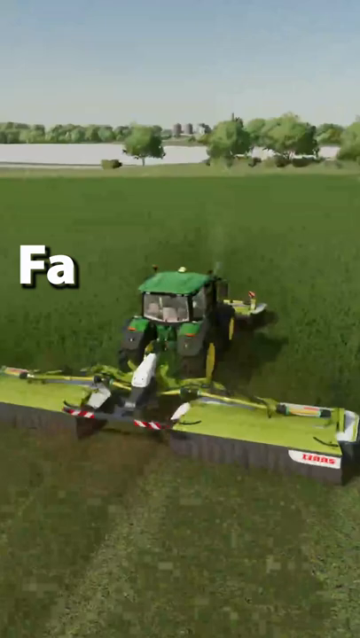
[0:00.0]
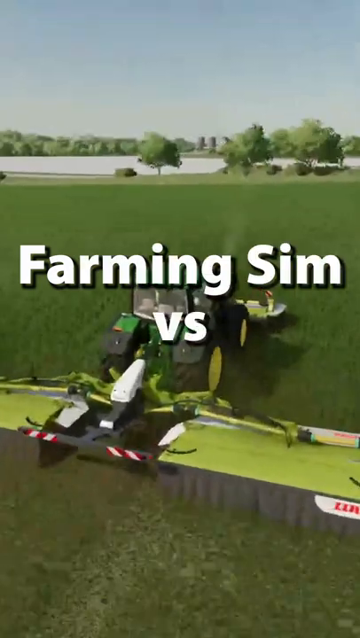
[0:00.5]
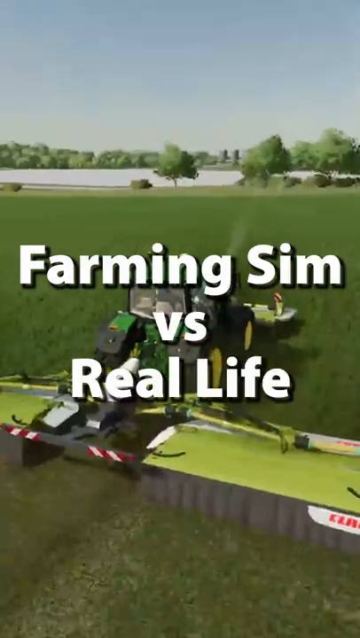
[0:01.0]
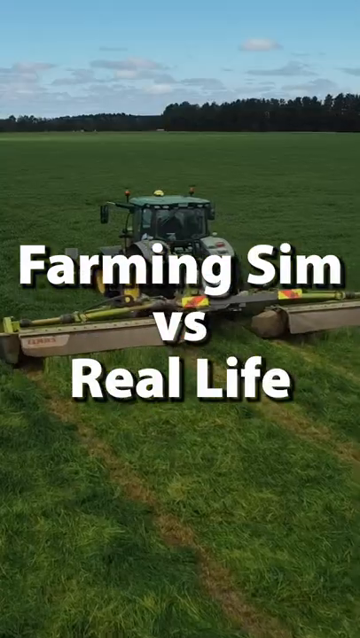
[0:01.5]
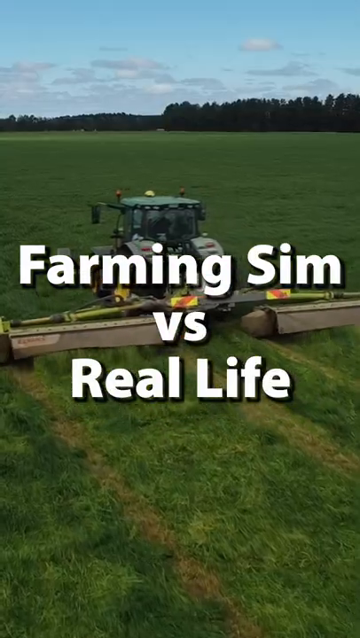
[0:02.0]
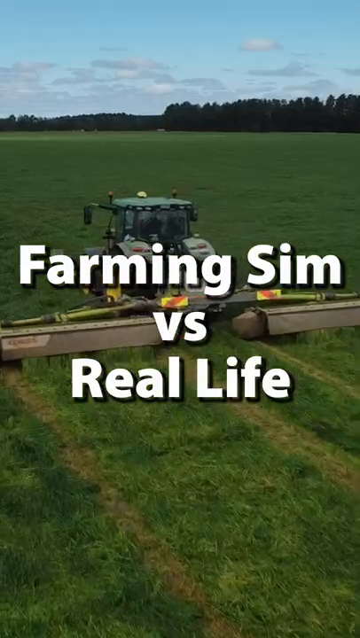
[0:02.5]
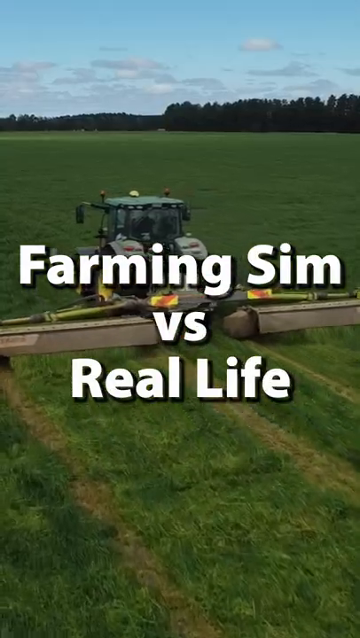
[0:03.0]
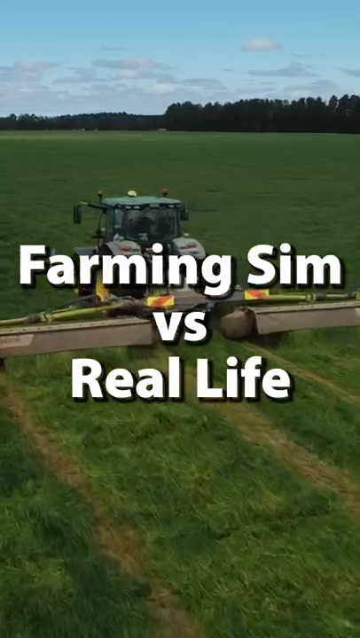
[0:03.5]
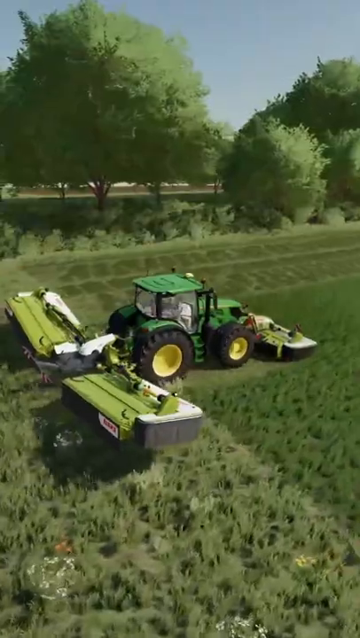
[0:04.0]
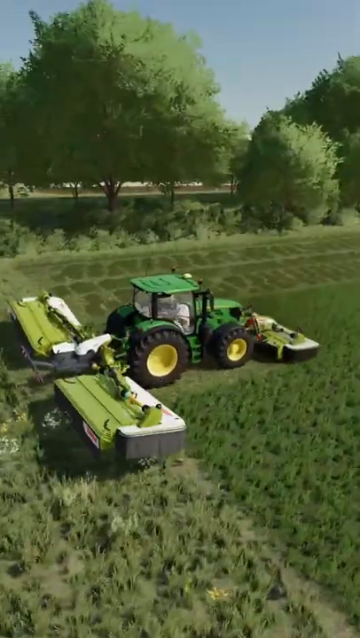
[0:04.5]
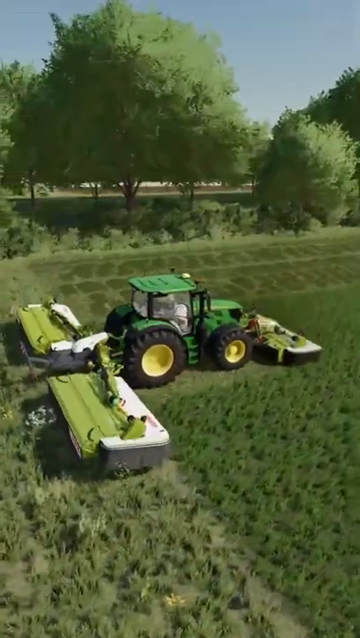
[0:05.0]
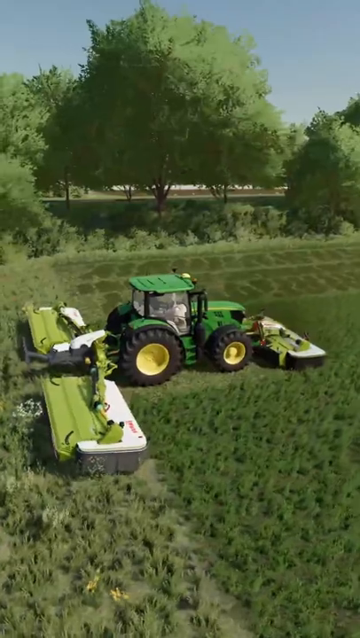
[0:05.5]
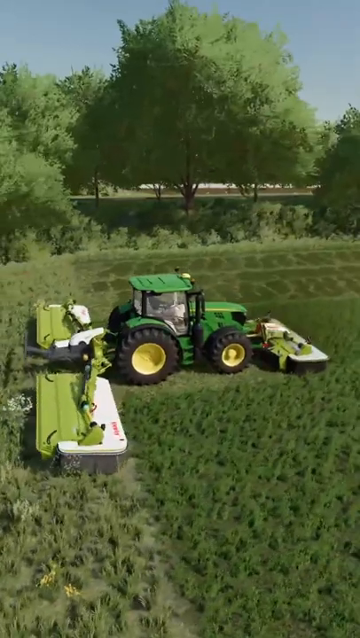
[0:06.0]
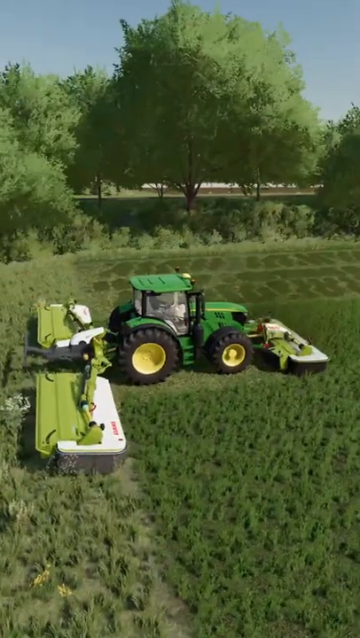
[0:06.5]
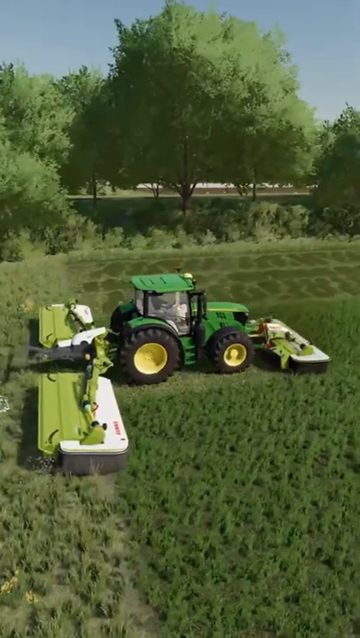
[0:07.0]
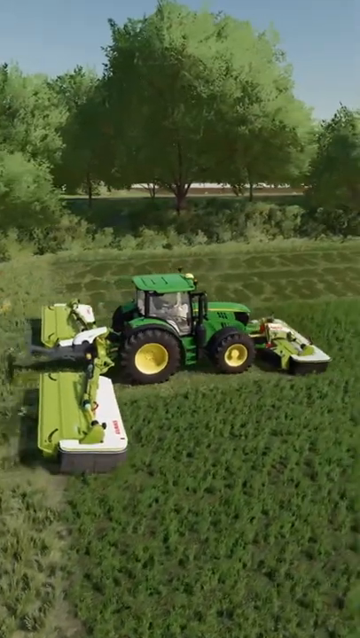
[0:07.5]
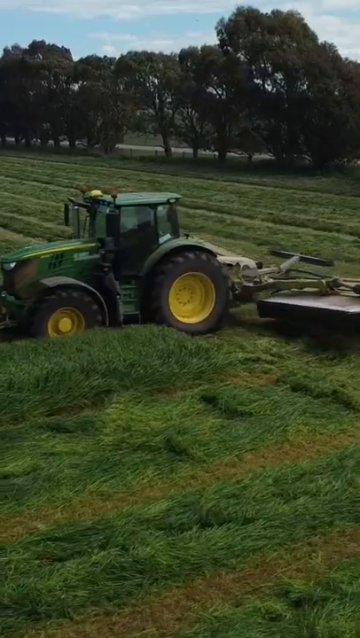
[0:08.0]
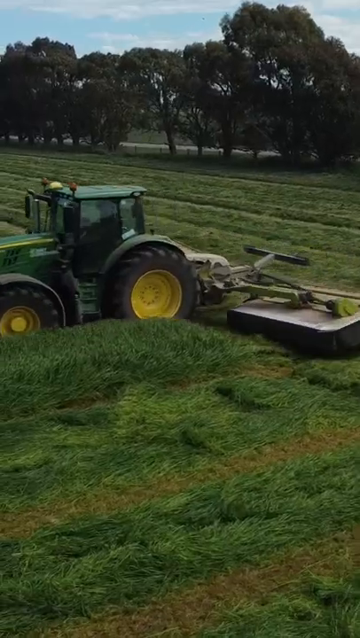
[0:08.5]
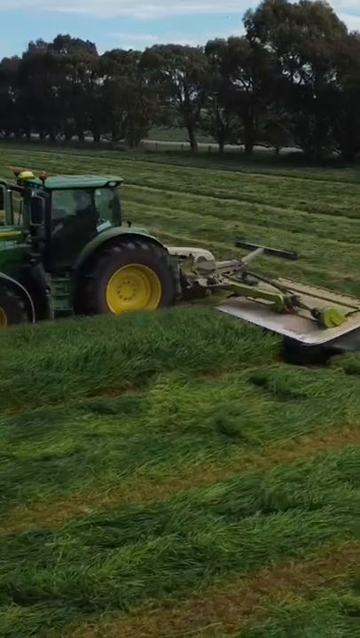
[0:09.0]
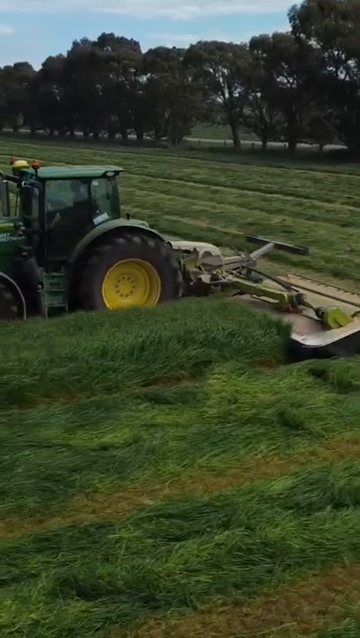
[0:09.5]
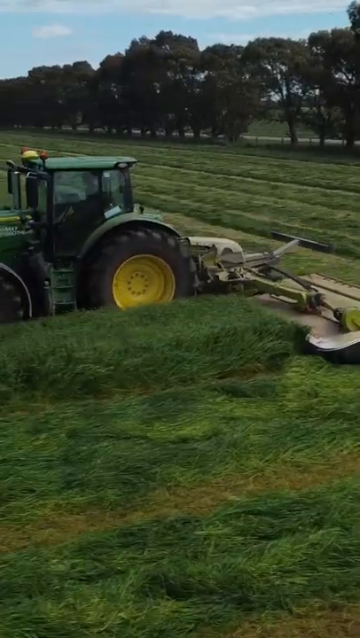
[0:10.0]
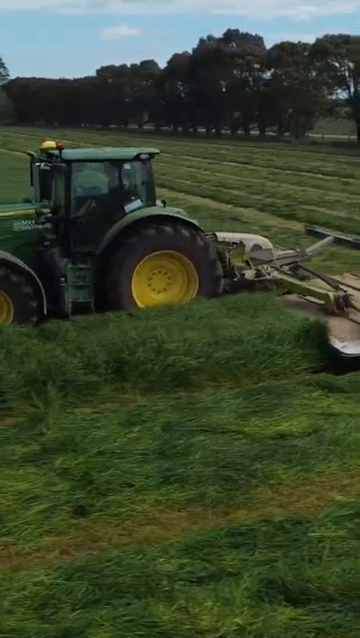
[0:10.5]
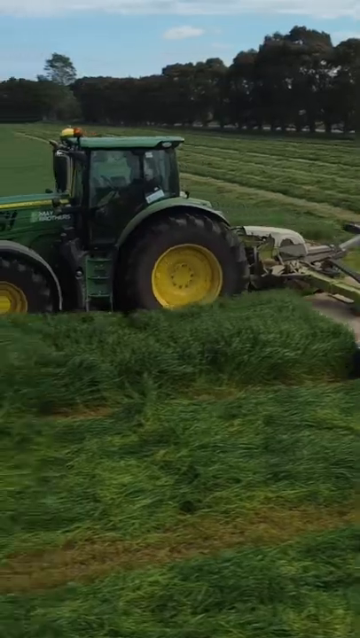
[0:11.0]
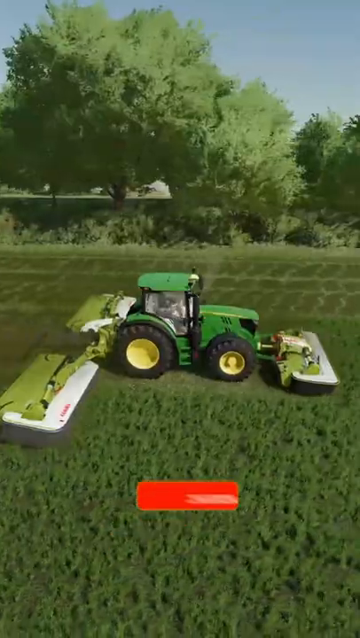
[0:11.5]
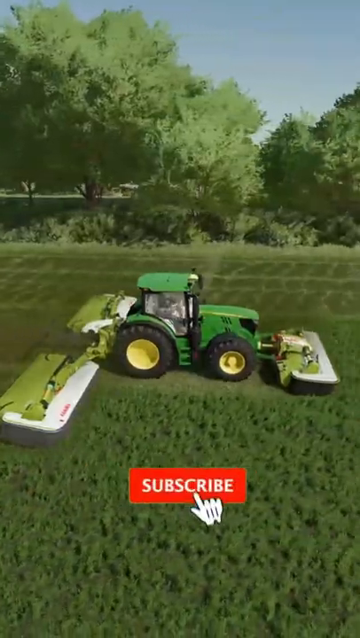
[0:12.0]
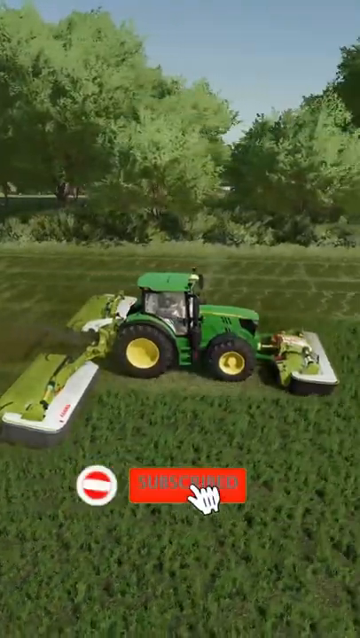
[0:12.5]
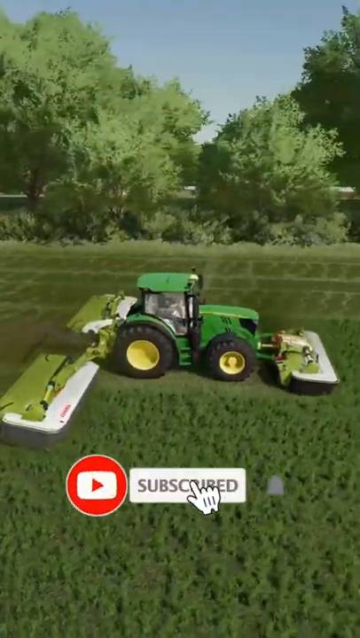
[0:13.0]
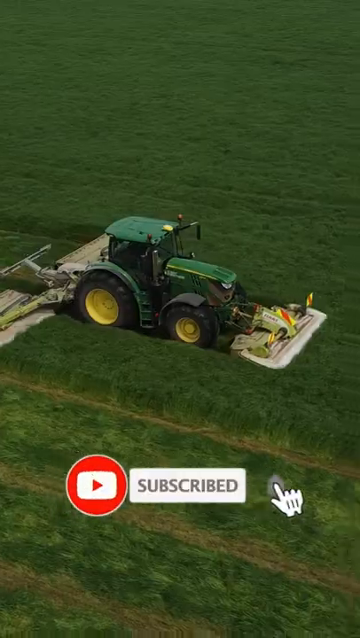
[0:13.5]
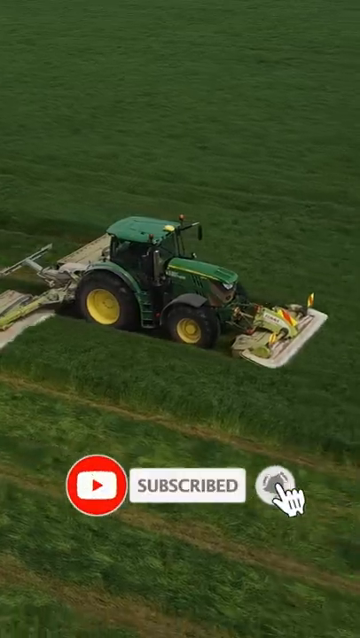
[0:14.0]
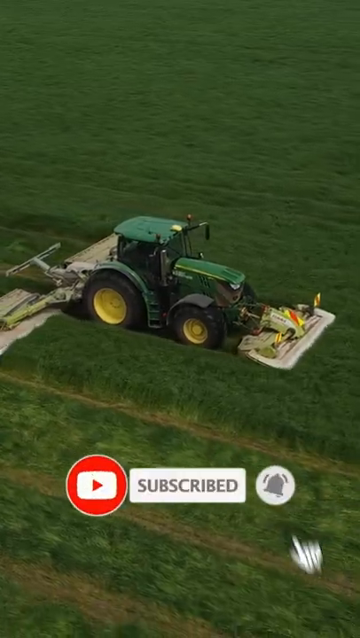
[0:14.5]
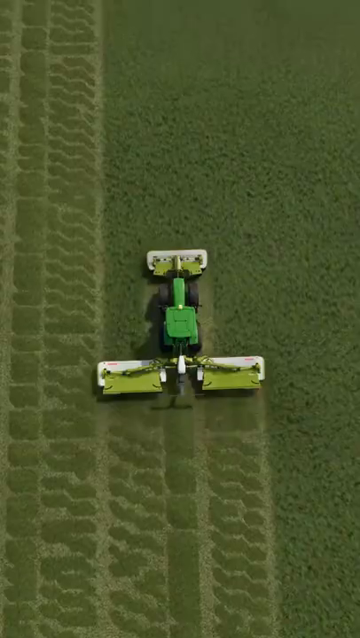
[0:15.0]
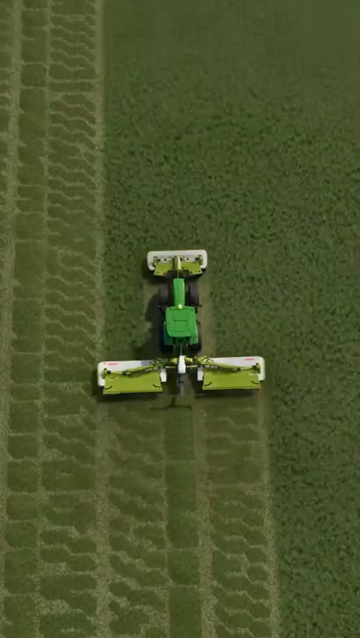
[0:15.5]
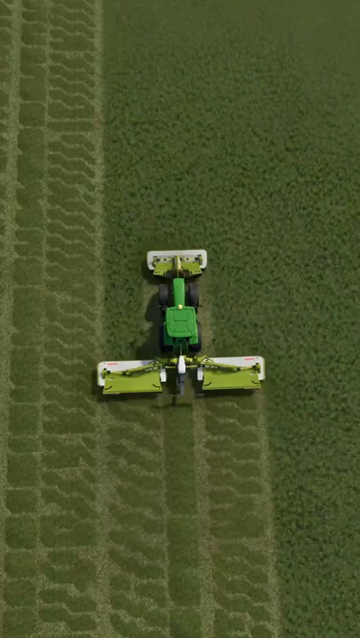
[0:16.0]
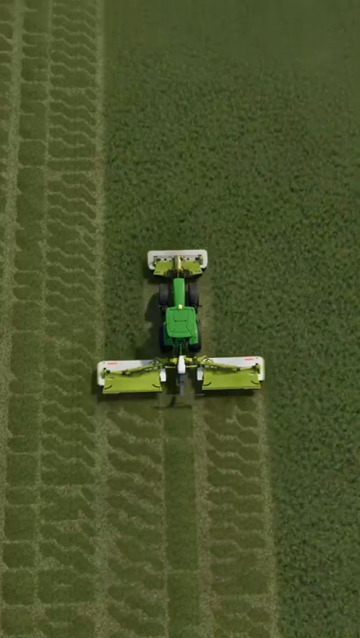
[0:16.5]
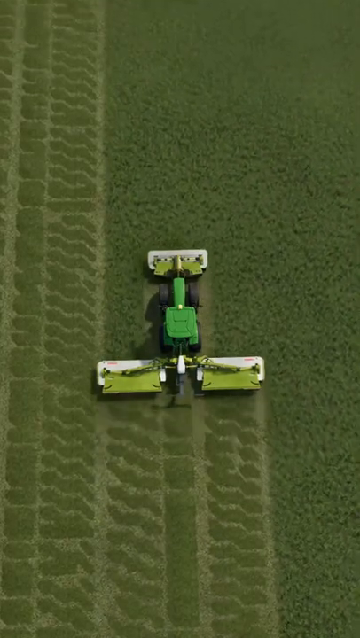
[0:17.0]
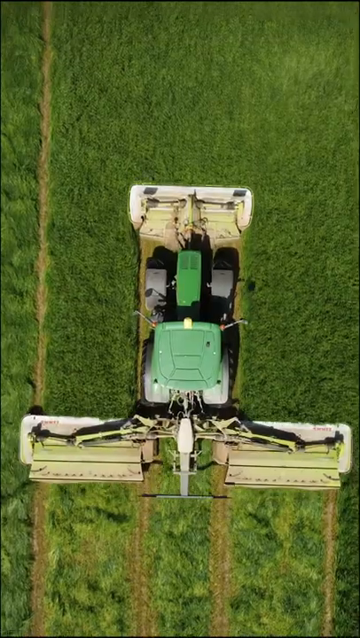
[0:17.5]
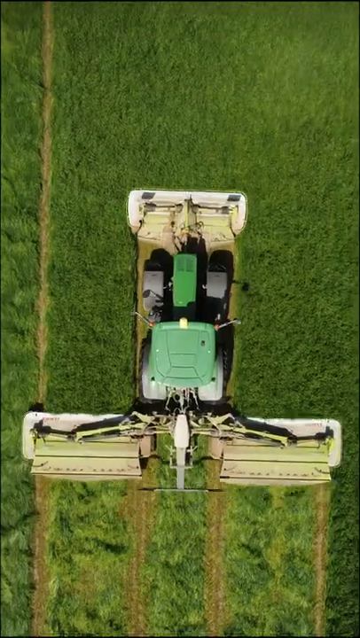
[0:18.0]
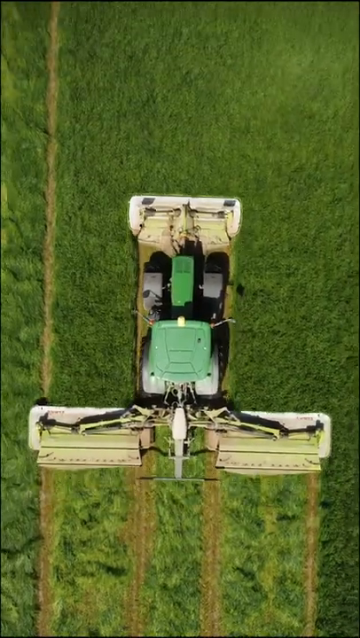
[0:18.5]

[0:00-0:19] Text on screen reads "farming soon versus real life." A giant green tractor with giant wheels, which seems to be cutting grass, drives in a straight line down a farm area covered in grass and field. It leaves really straight, neat lines across a very wide area, almost like the lines left by a vacuum. On the back it has what almost look like wings: two big metal shears coming out of it, presumably what is cutting the grass. The tractor then kind of stops with a bunch of grass kind of on top of it, maybe stuck. A "1.8" subscribe button then appears.